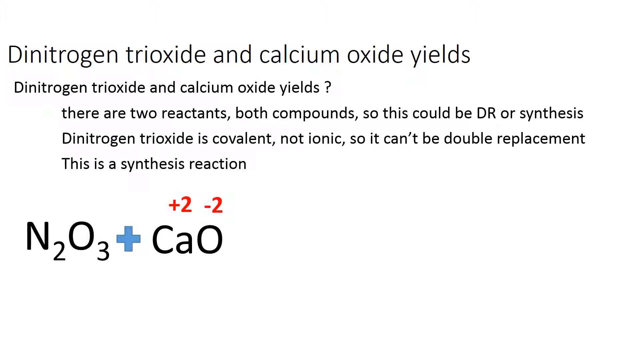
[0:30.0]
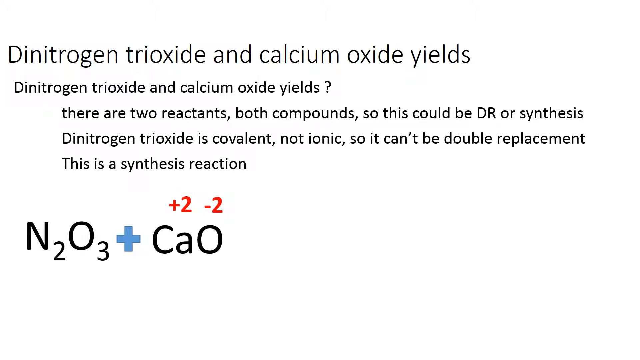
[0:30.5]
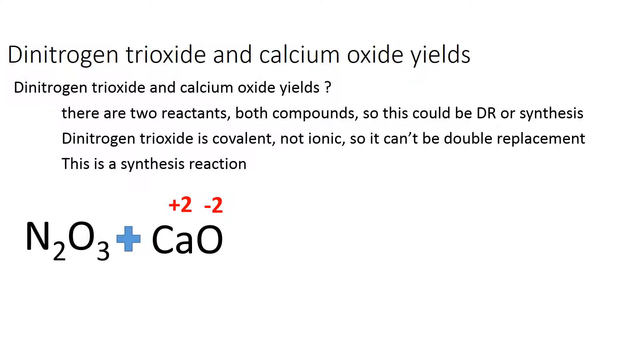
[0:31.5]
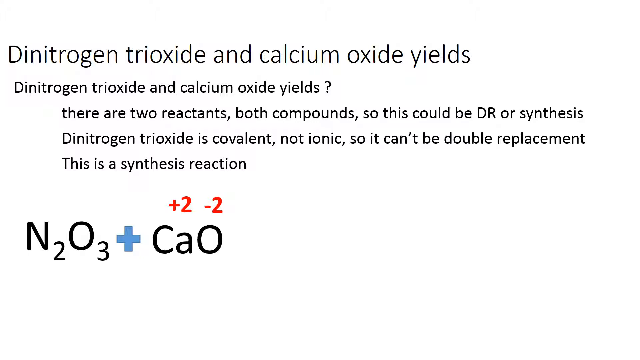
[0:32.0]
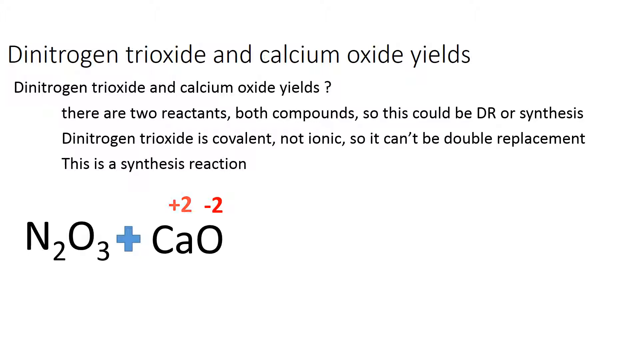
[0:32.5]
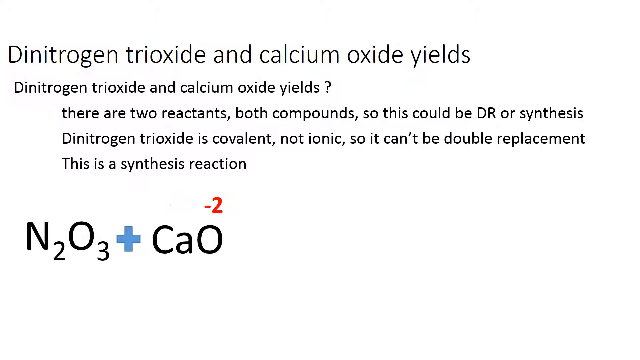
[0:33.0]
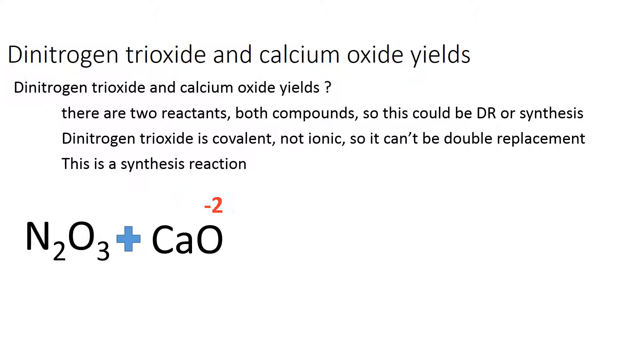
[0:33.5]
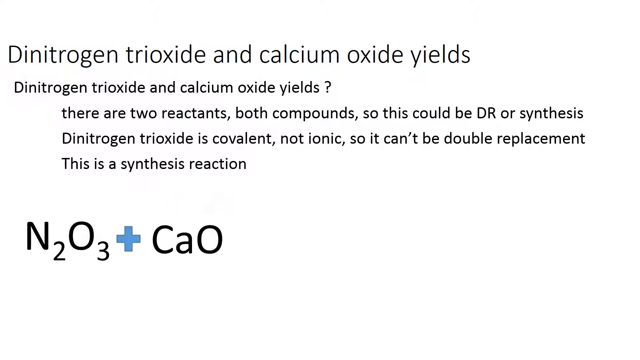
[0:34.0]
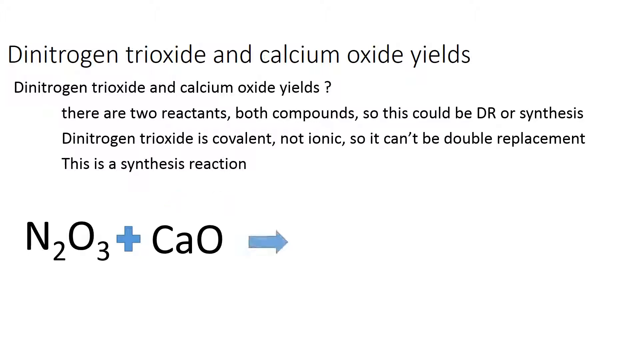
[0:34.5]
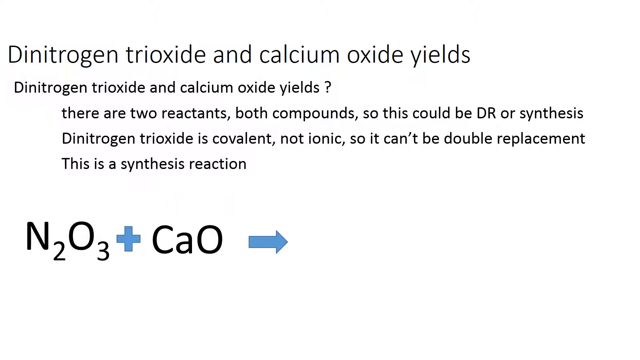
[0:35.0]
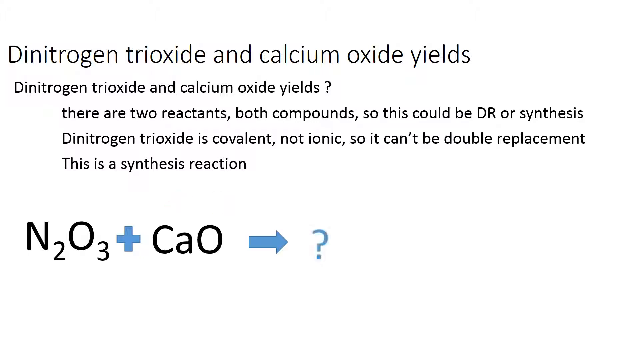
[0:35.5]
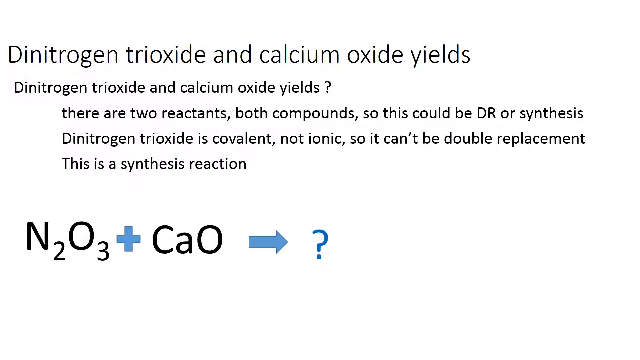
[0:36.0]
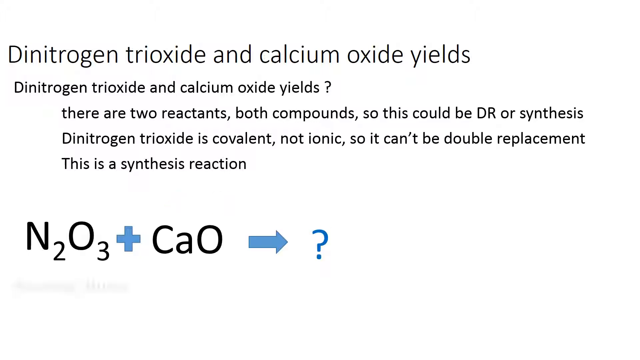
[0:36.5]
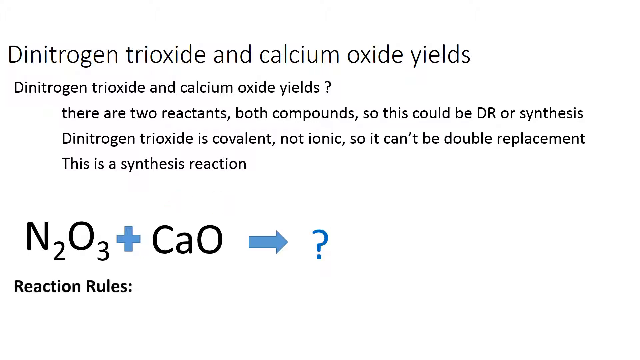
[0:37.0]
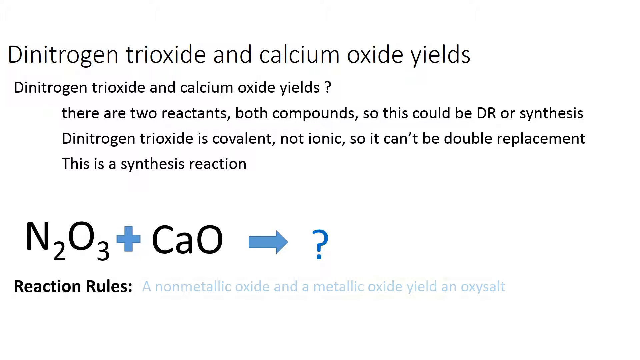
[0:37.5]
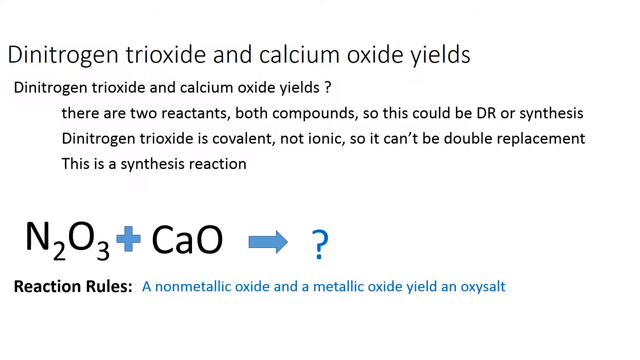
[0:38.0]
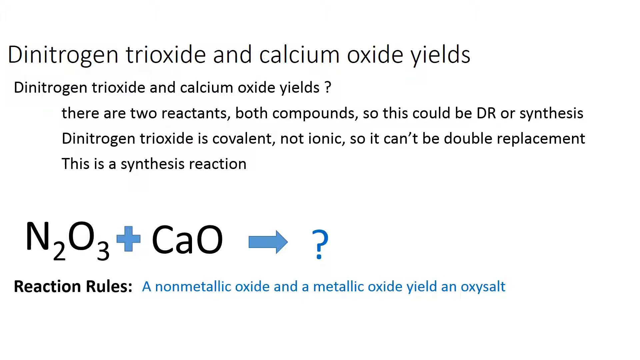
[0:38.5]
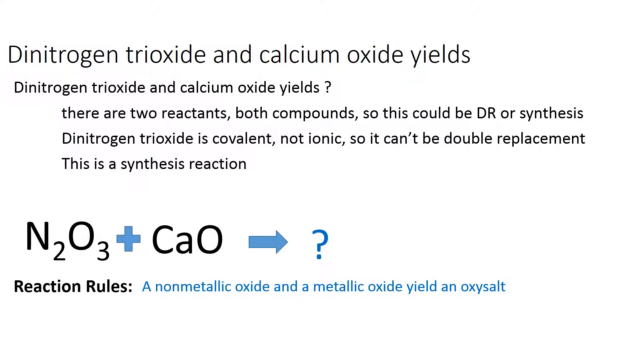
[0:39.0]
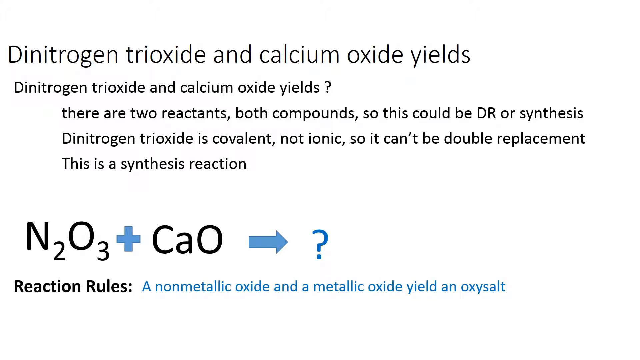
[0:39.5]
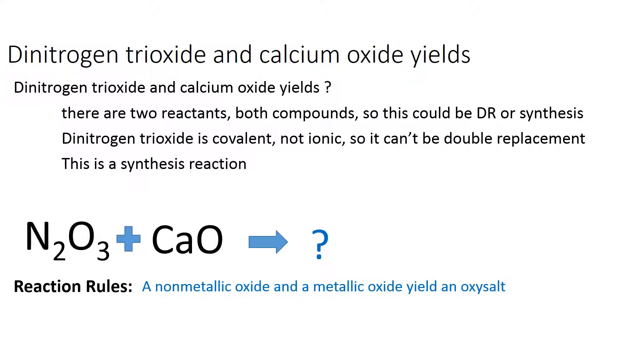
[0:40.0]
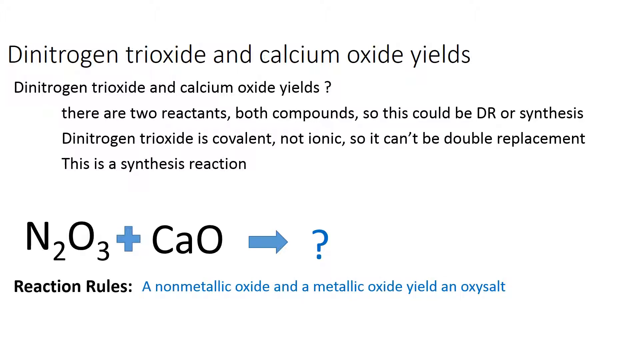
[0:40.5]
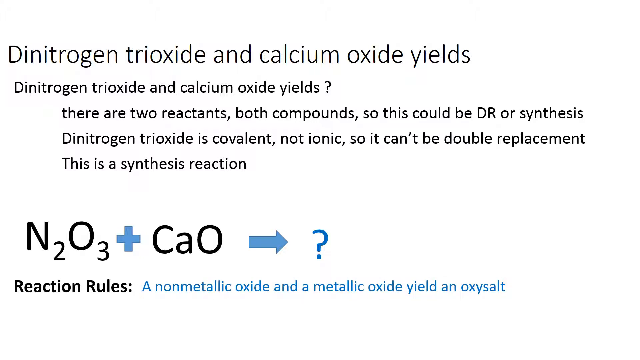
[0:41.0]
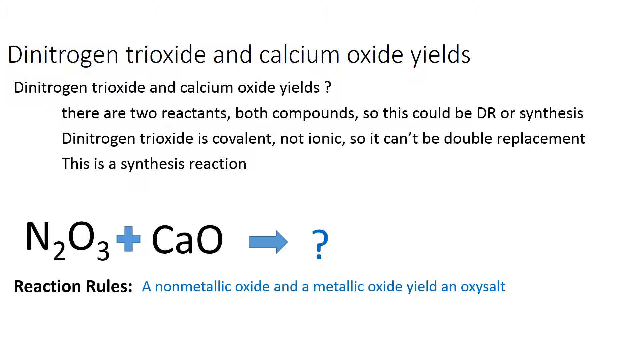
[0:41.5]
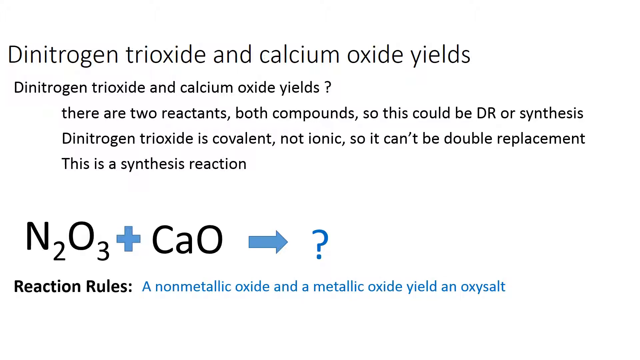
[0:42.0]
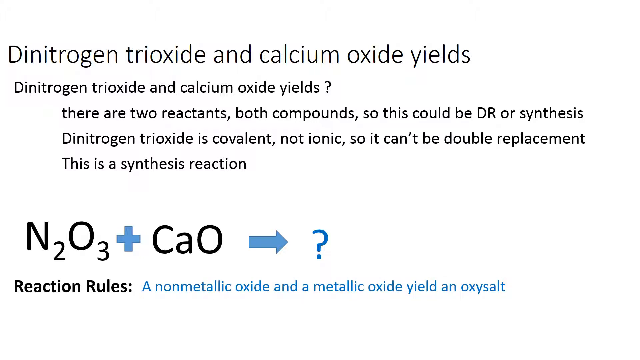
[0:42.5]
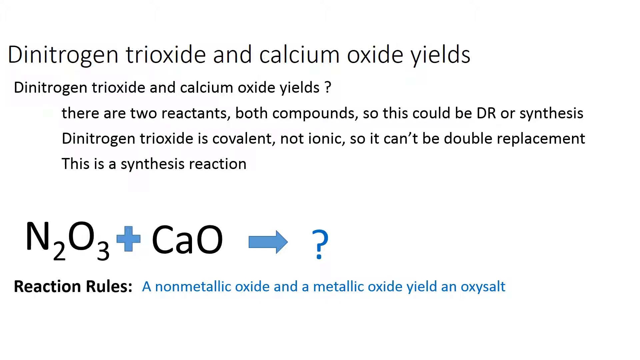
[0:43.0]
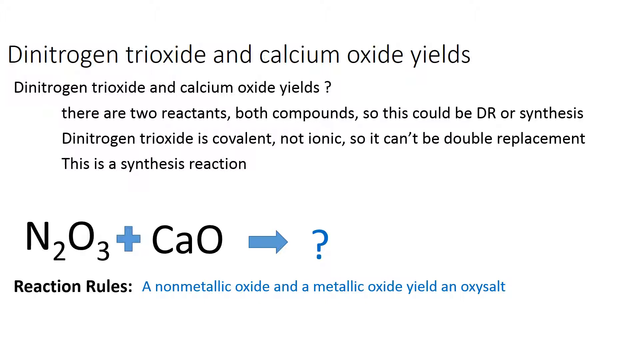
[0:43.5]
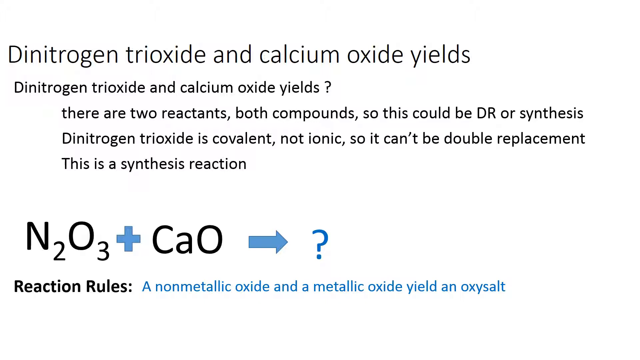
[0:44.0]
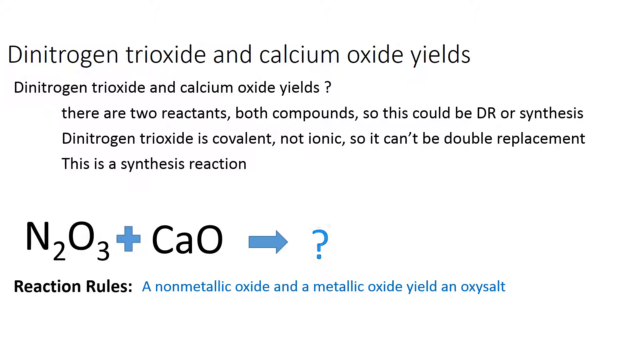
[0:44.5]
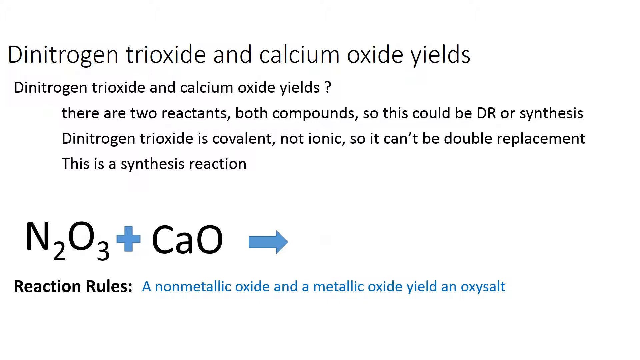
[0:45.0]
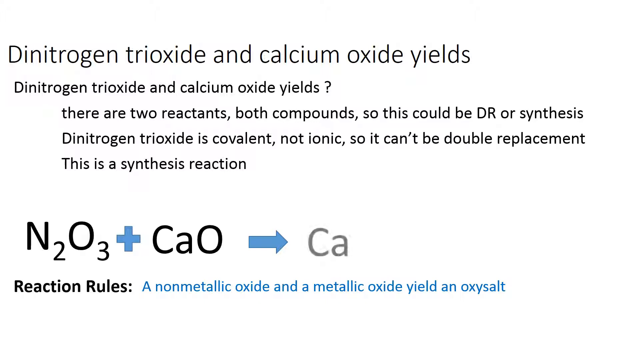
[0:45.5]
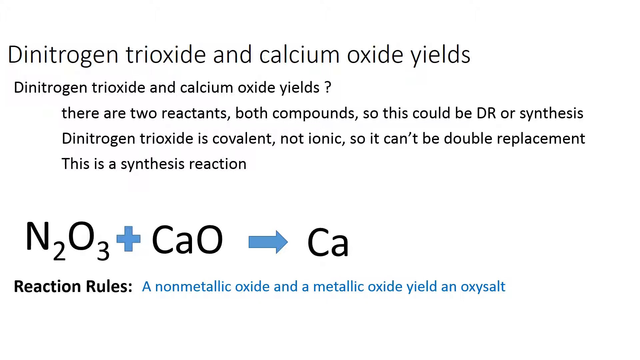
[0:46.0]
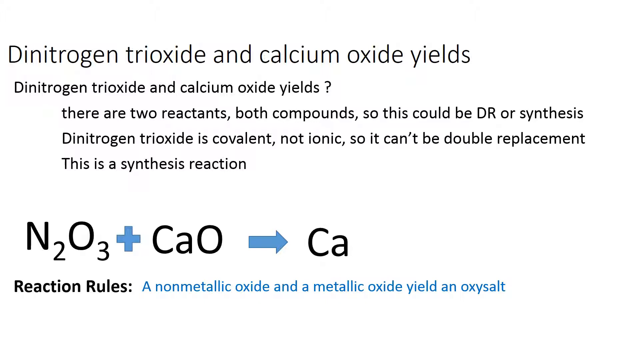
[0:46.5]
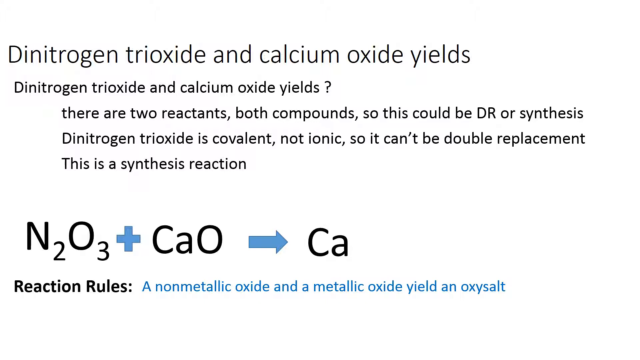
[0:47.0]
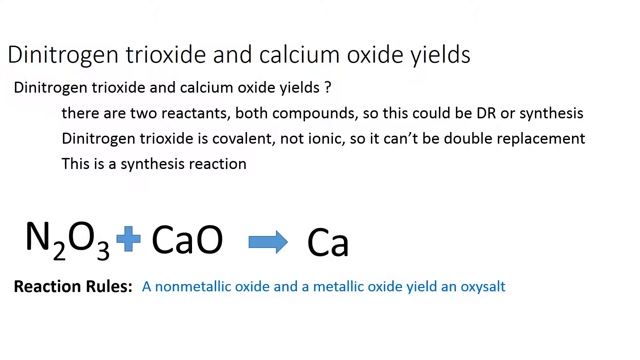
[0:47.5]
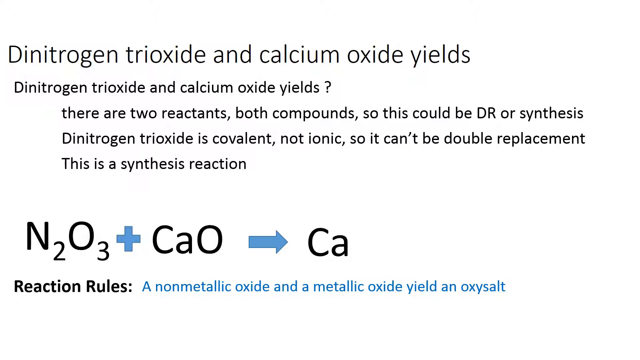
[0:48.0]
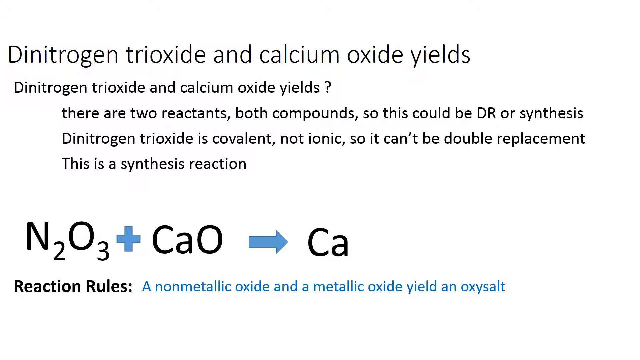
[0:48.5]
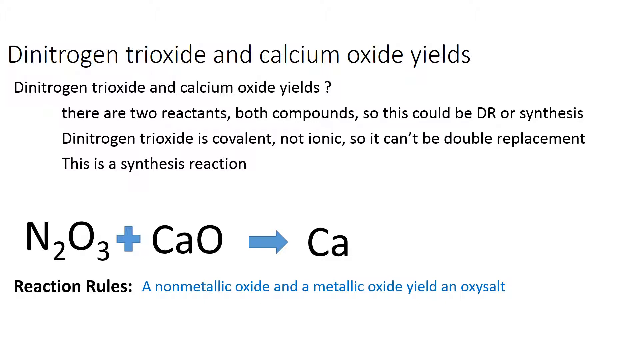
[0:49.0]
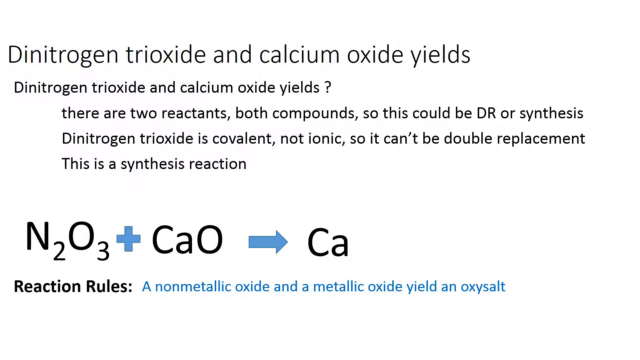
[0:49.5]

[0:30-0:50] The background is white. Black text at the top says "Dinitrogen Trioxide and calcium oxide yields." Beneath it, smaller black text says "Dinitrogen trioxide and calcium oxide yields" with a ? to its right. Below that, black text says "there are two reactants, both compounds, so this could be DR or synthesis," then "Dinitrogen trioxide is covalent, not ionic, so it can't be double replacement," and then "This is a synthesis reaction." Beneath that is larger black text that says "N2O3," with a blue + mark to its right and black text "CaO" to the right of the + mark. Red text that says "+2" and "-2" is above "CaO." The red text above "CaO" disappears. A blue right arrow appears to the left of the text "CaO," with a blue ? symbol to the right of the arrow. Beneath that, new black text appears that says "Reaction Rules:" and to its right appears blue text that says "A nonmetallic oxide and a metallic oxide yield an oxysalt." The blue ? symbol to the right of the arrow disappears and is replaced by black text that says "Ca."